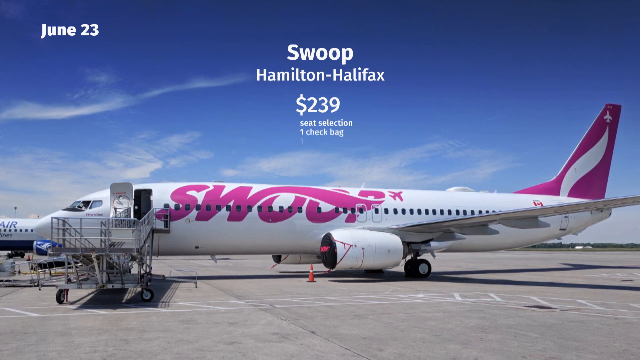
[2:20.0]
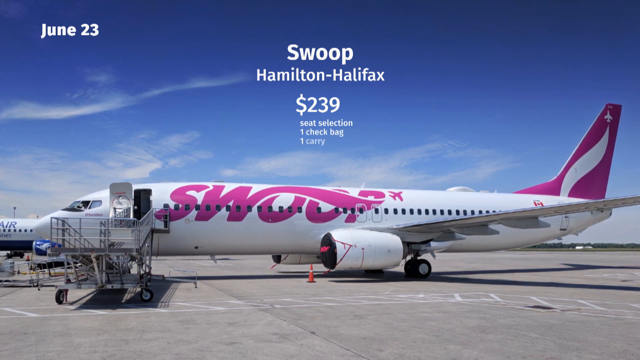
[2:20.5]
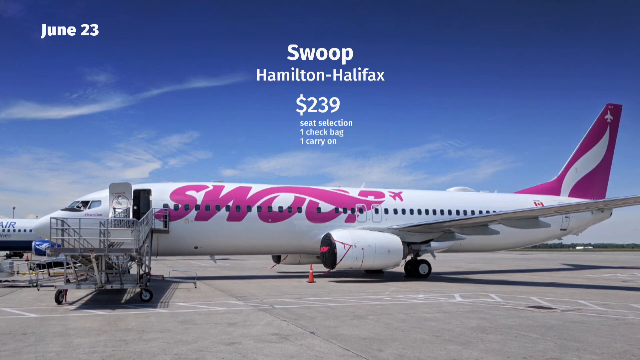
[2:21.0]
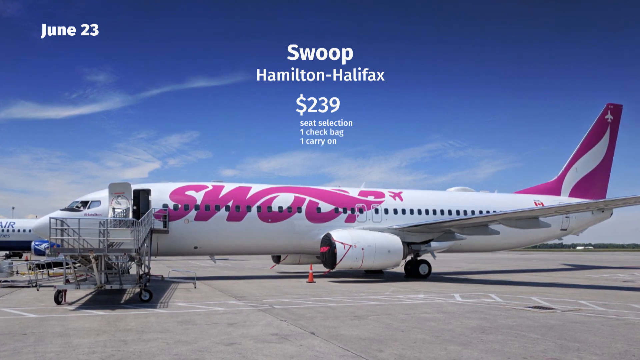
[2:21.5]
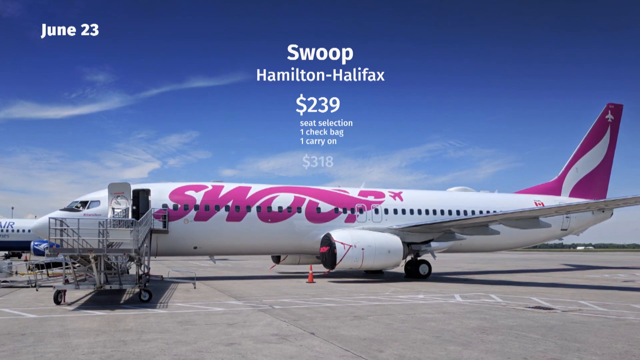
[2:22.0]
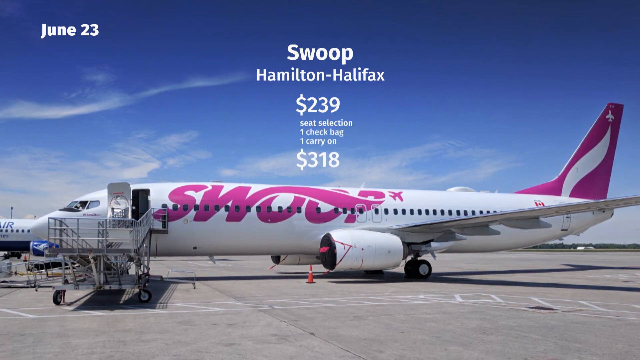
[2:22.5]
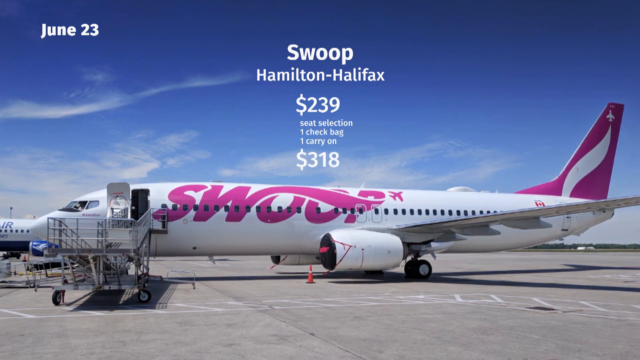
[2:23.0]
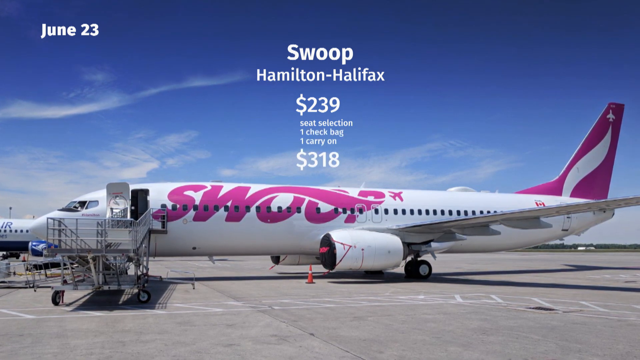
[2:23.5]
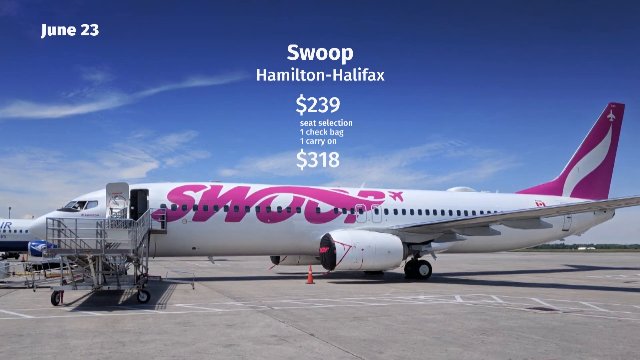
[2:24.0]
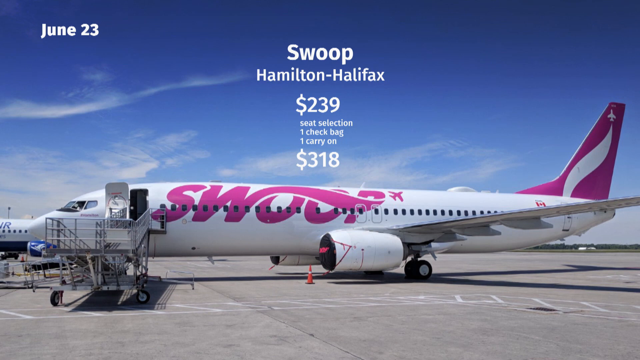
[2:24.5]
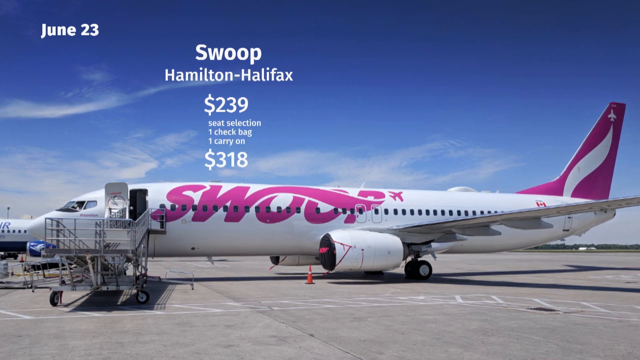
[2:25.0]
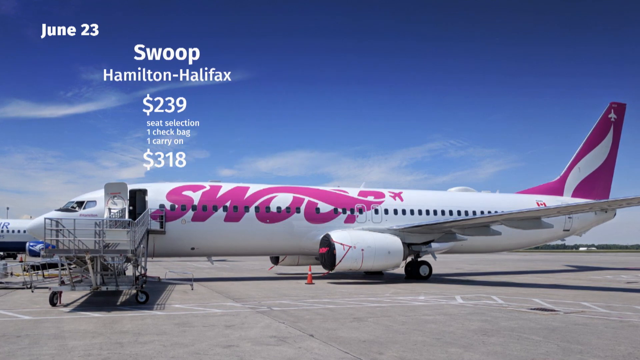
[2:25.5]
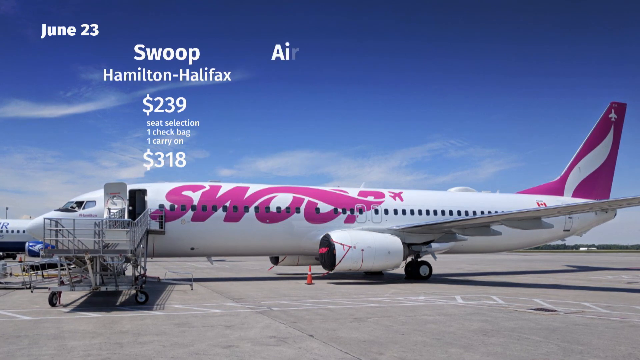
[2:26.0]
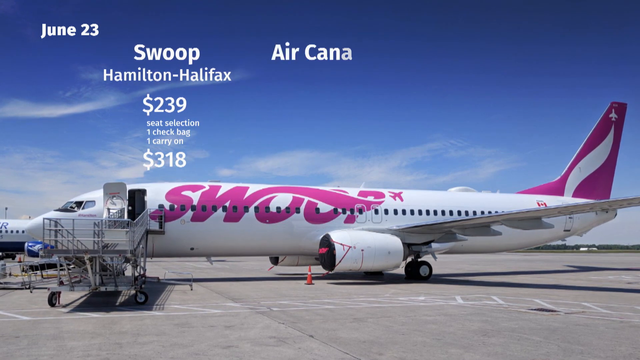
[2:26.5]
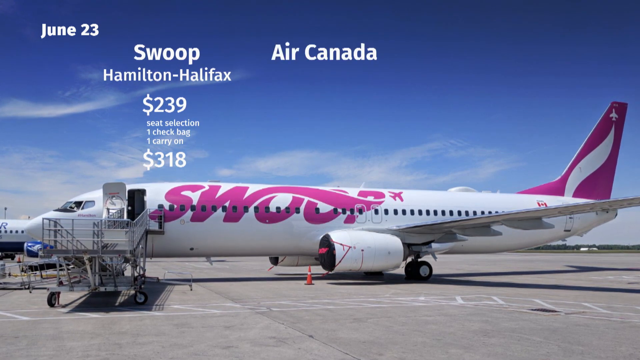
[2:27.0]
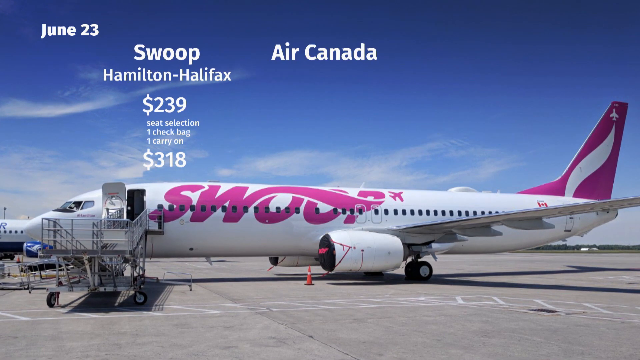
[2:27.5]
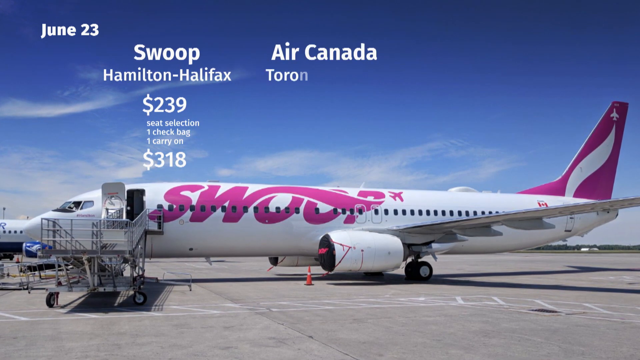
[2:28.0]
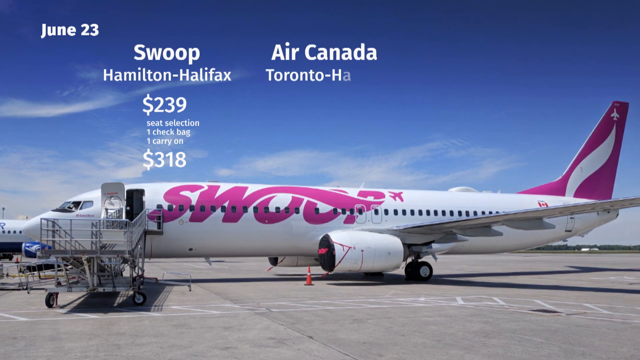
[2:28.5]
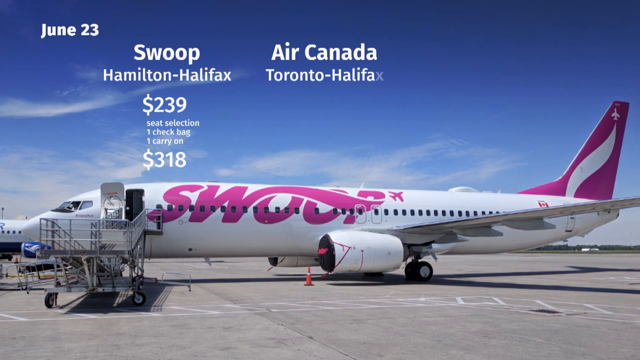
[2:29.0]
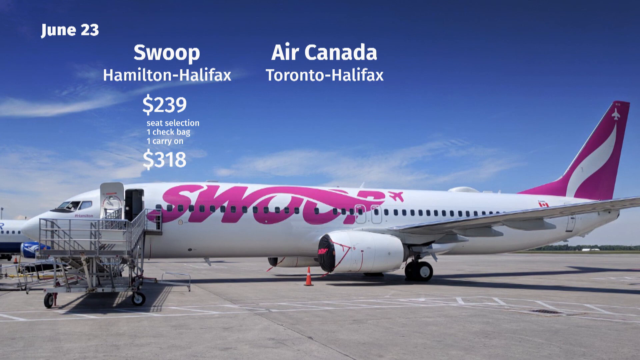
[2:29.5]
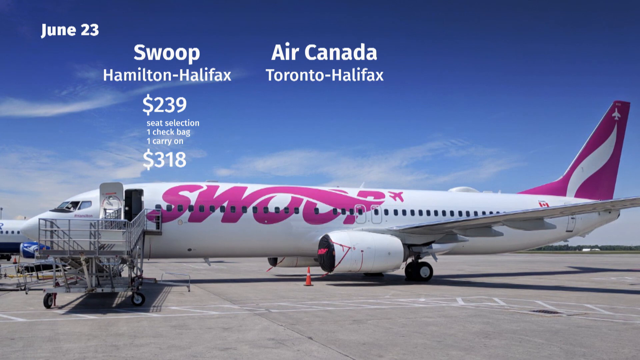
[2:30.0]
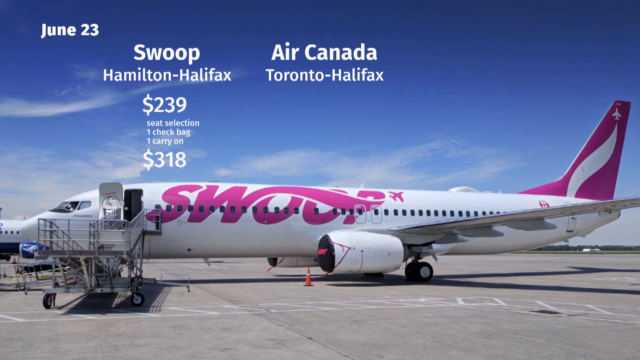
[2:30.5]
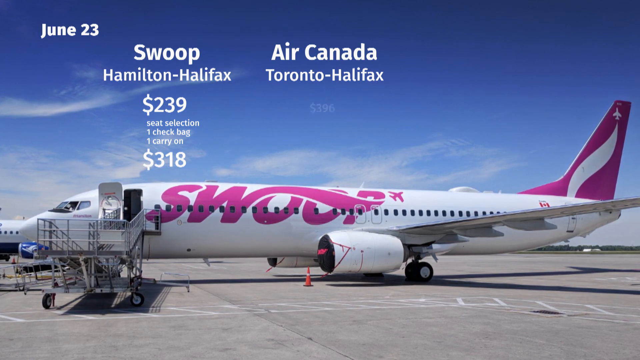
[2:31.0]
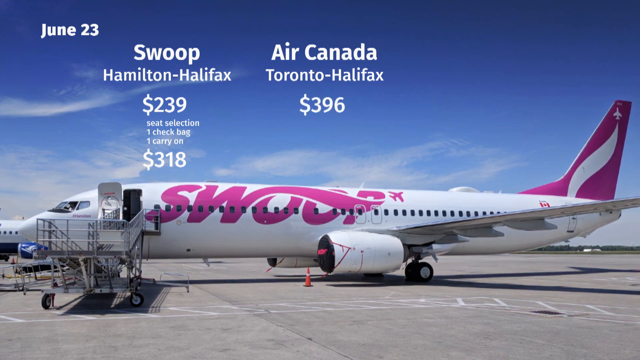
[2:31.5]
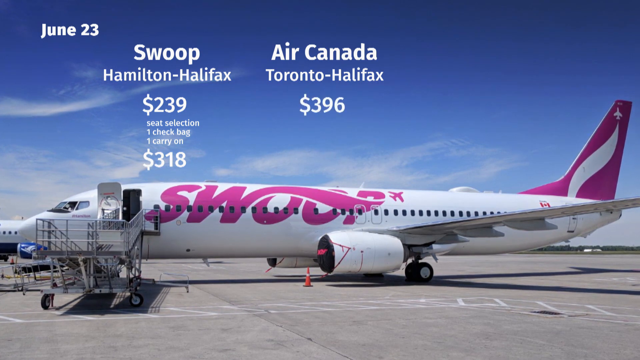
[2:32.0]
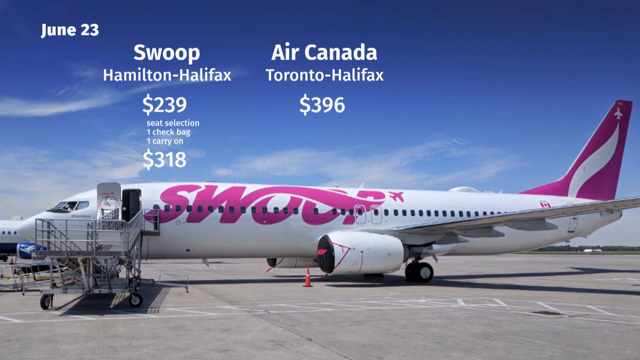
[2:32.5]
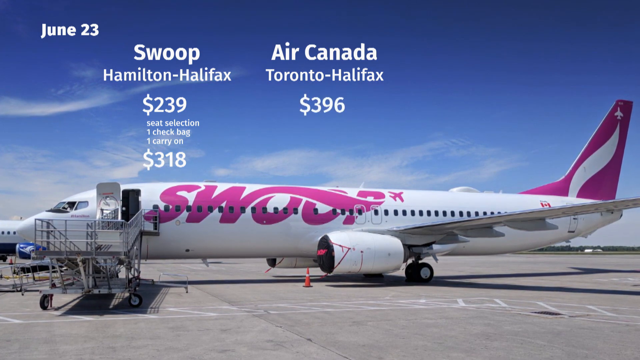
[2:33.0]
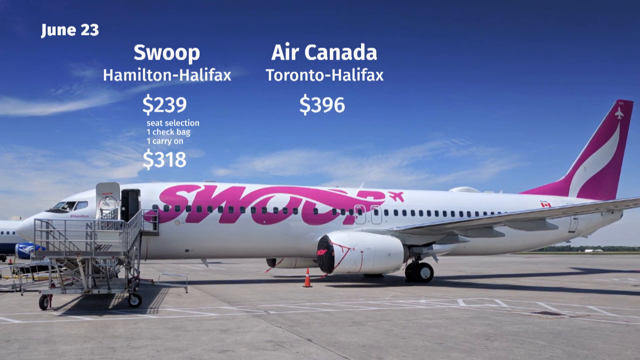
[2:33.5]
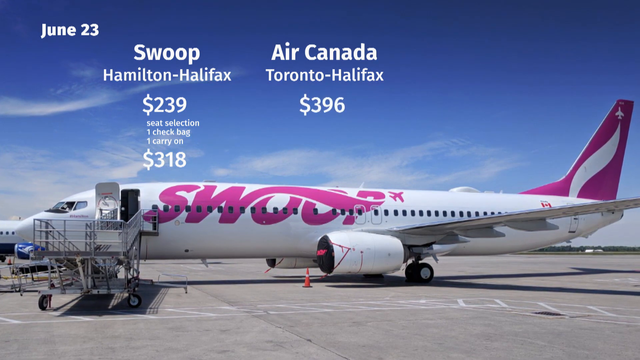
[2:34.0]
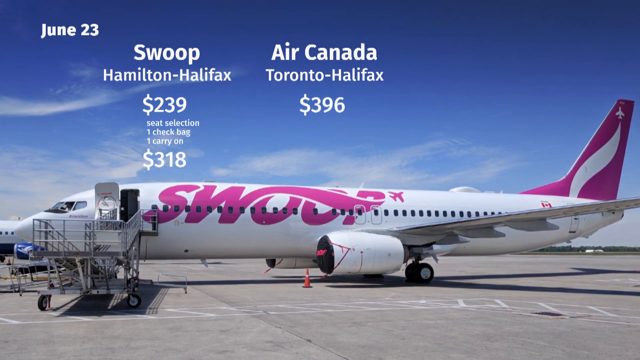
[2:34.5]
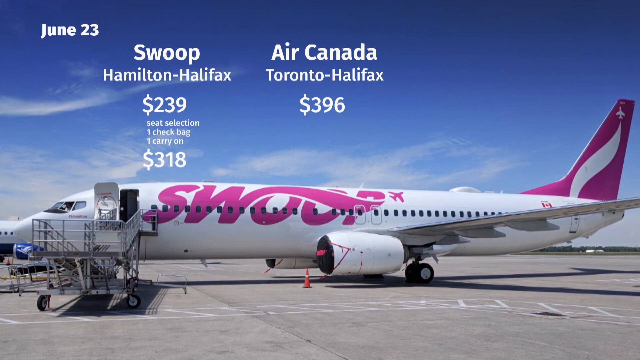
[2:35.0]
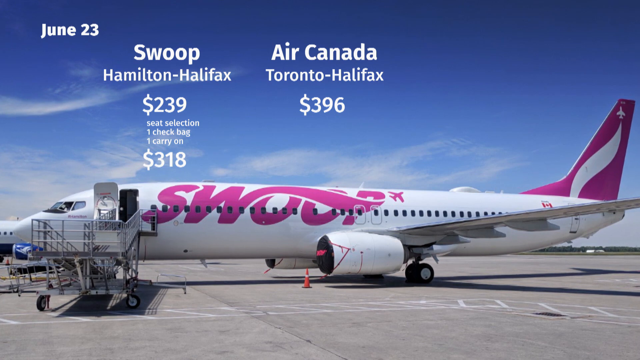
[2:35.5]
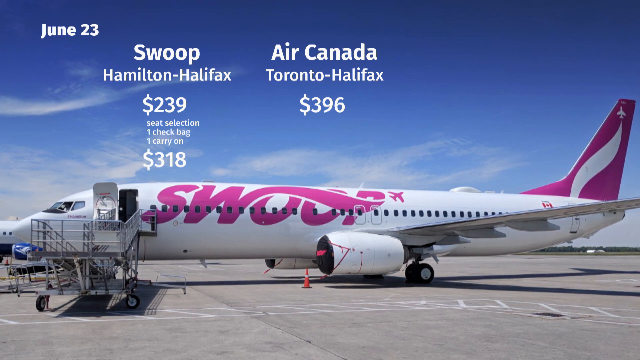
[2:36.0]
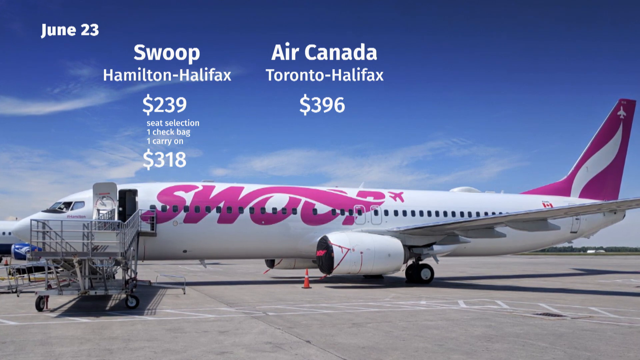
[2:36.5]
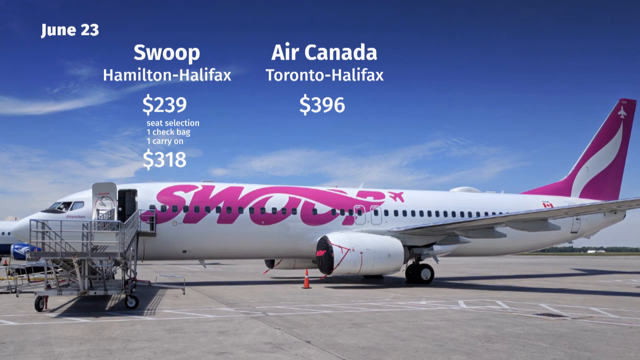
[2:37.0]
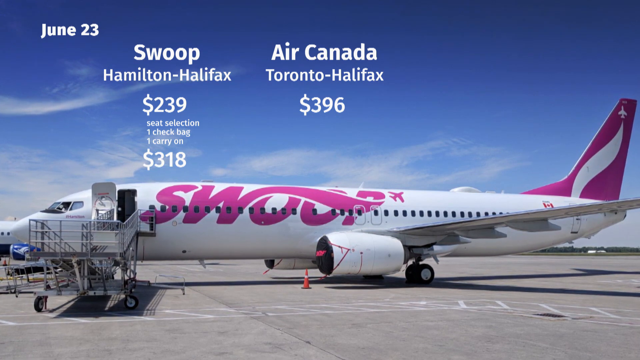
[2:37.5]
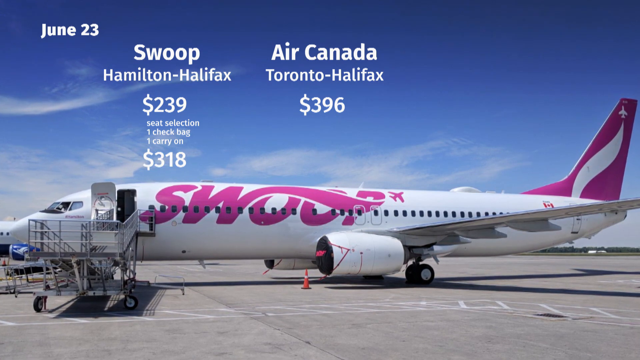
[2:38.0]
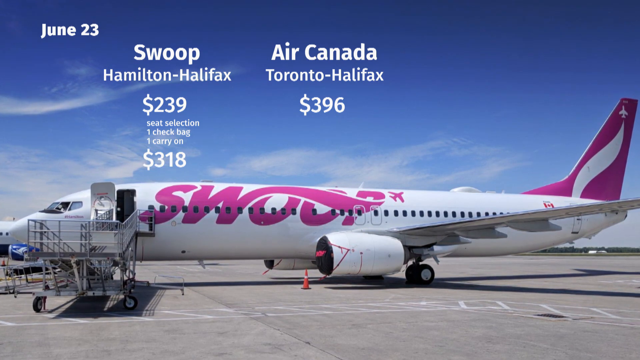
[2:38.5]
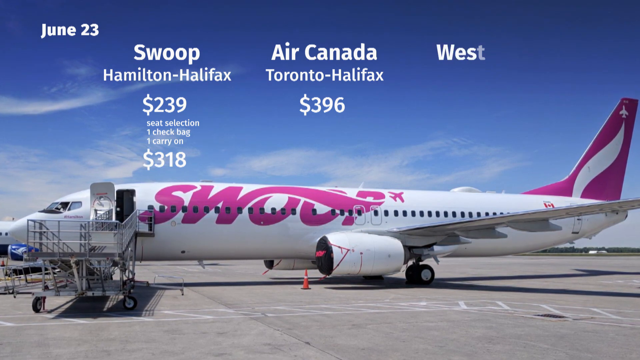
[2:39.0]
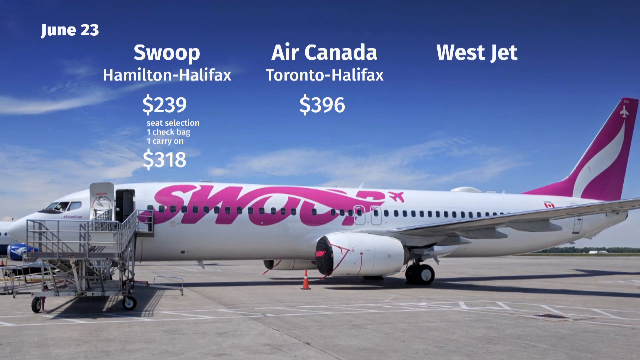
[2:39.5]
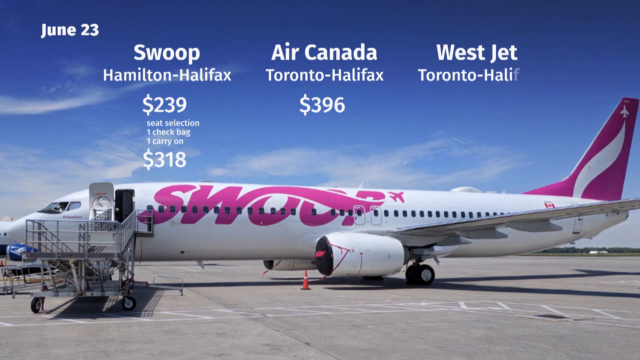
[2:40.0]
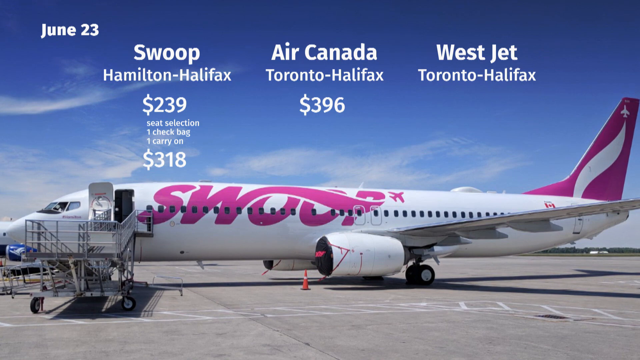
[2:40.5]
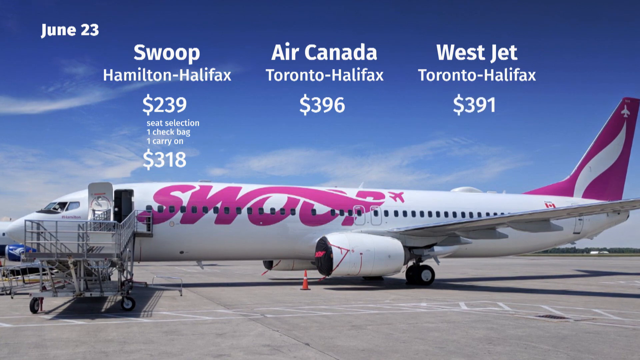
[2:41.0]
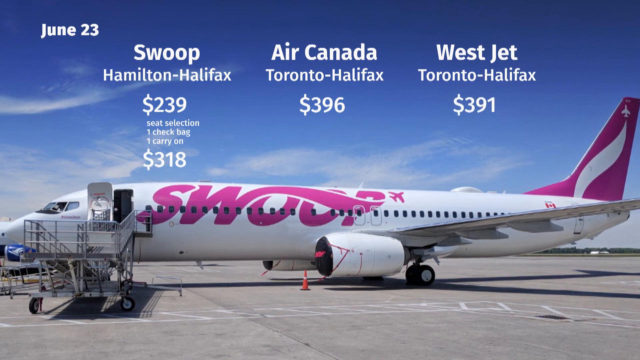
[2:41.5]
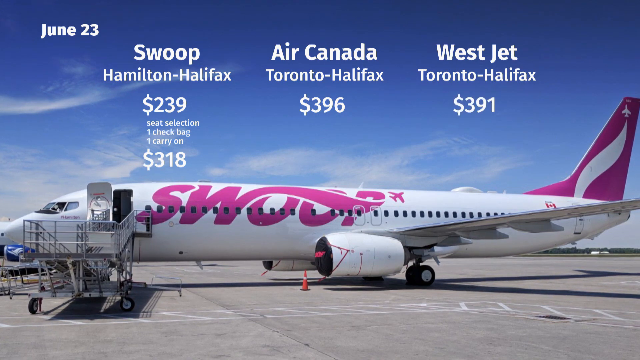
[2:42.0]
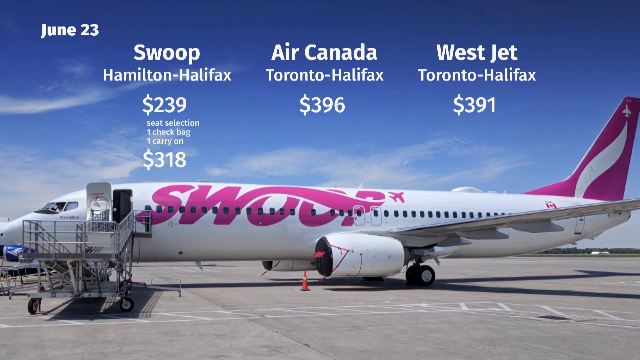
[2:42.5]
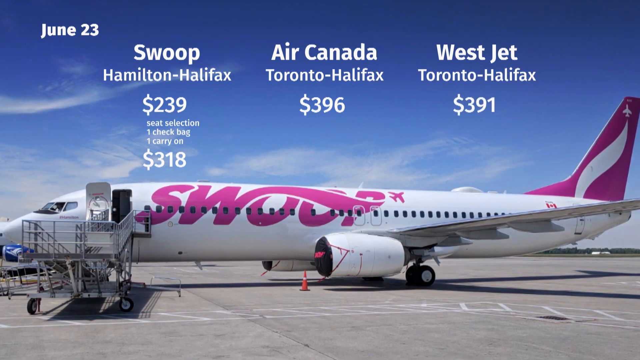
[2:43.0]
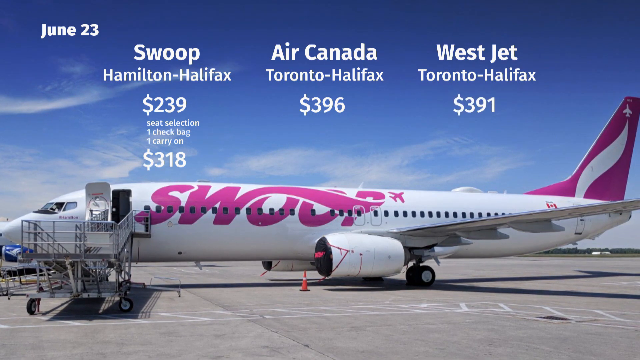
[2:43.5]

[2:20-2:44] A side view of an airplane shows large pink cursive lettering on its side reading "Swoop", with the tail fin in the same pink. Text on the screen above the airplane reads "Swoop Hamilton Halifax $239. Seat selection check bag one carry-on $318." The text swipes to the left while staying on screen, and new text appears: "Air Canada Toronto to Halifax $396. WestJet, Toronto to Halifax, $391." In the very top left corner of the screen, white text reads "June 23rd". The image of the airplane is a still image. Large orange safety cones stand in front of the airplane's twin turbines, an empty passenger ramp is positioned next to the airplane's door, and a cockpit window is open. The sky above is light blue with light white clouds.